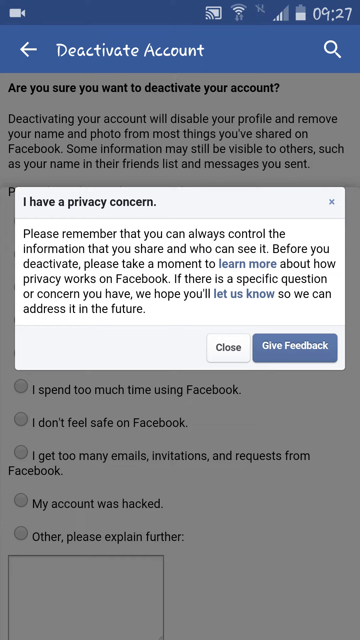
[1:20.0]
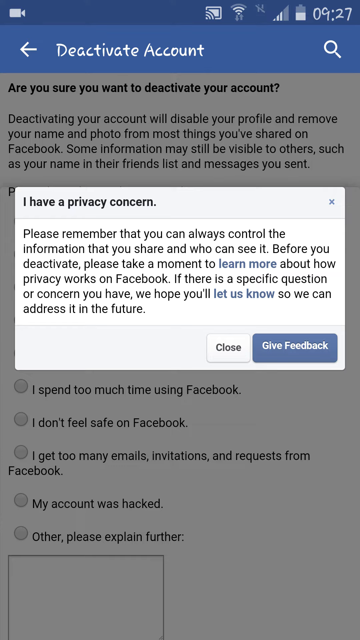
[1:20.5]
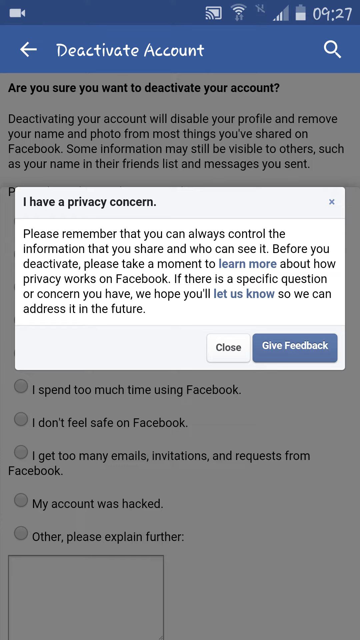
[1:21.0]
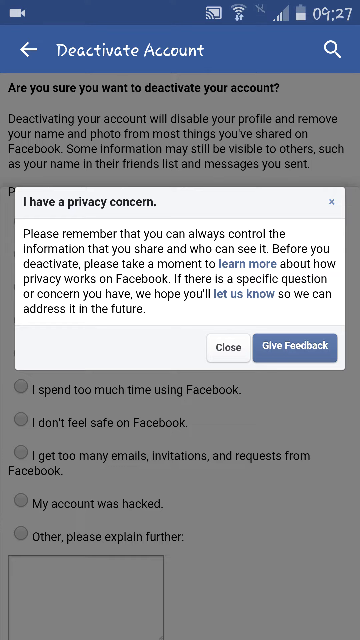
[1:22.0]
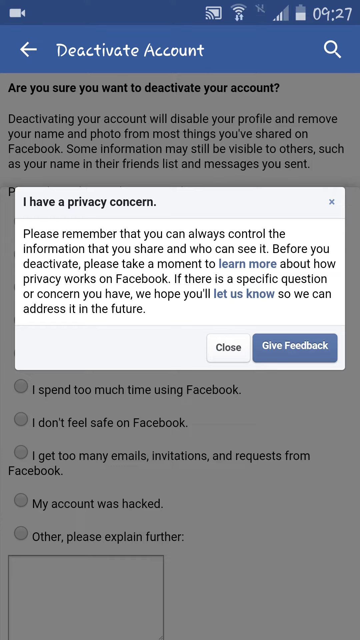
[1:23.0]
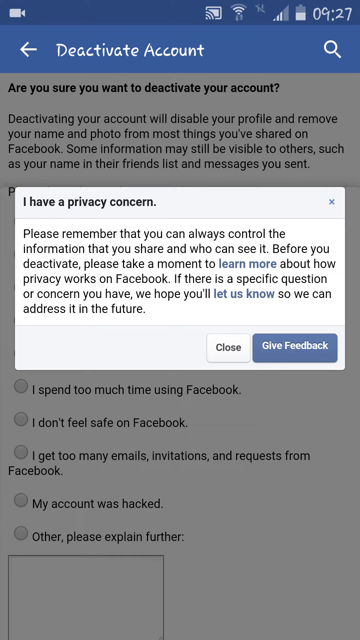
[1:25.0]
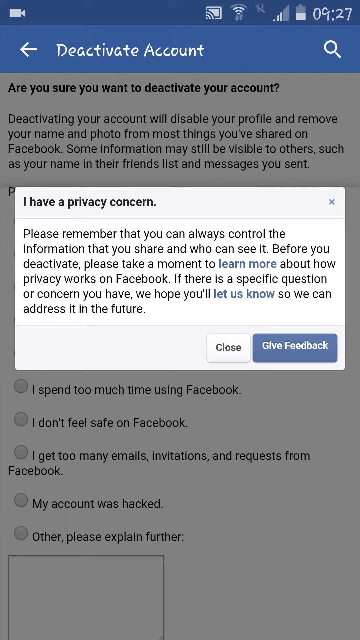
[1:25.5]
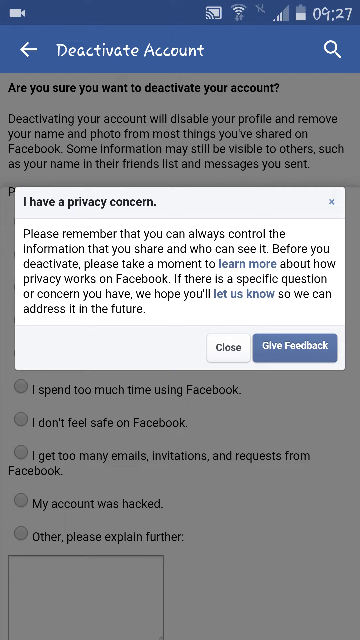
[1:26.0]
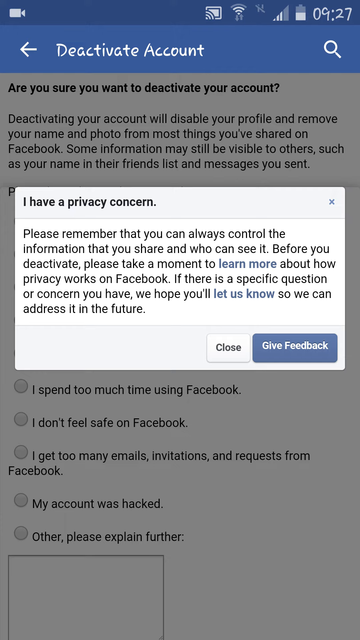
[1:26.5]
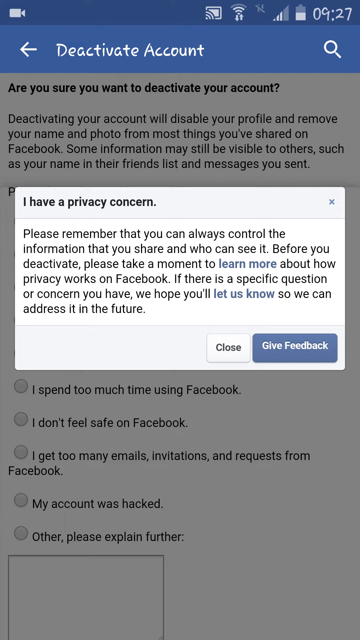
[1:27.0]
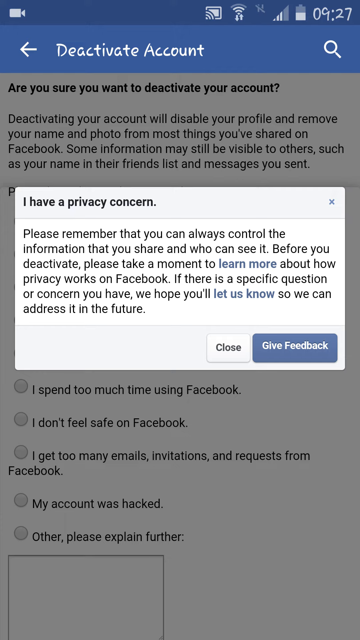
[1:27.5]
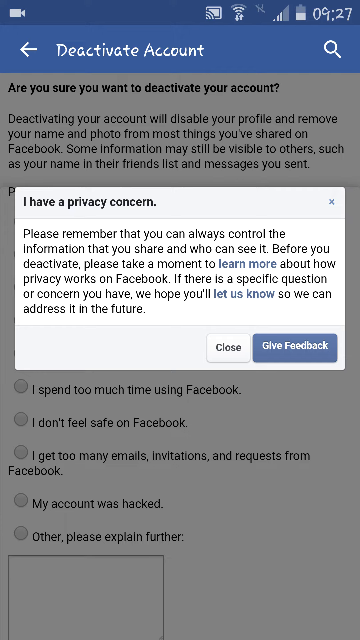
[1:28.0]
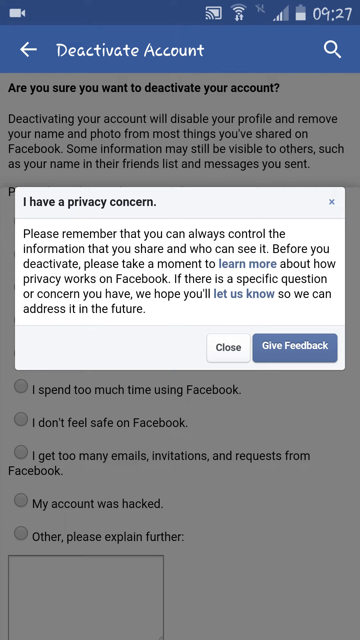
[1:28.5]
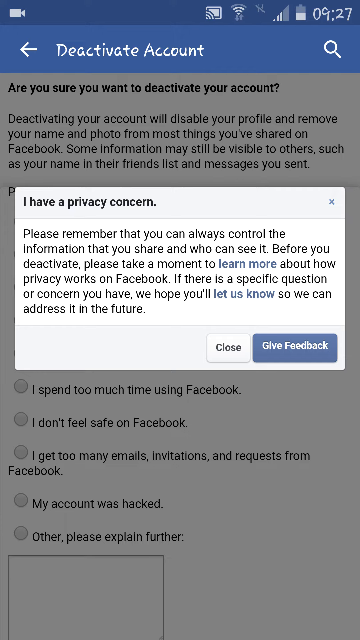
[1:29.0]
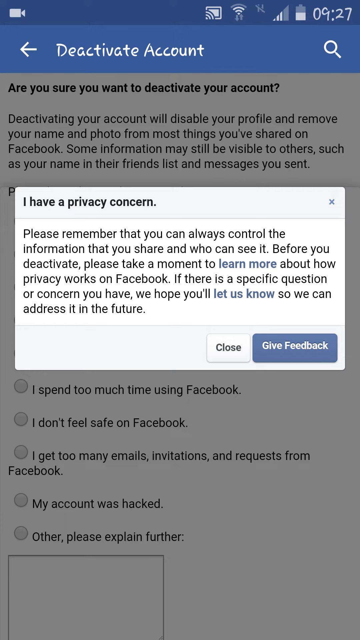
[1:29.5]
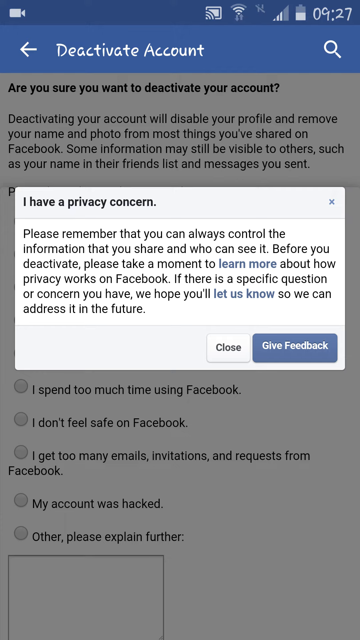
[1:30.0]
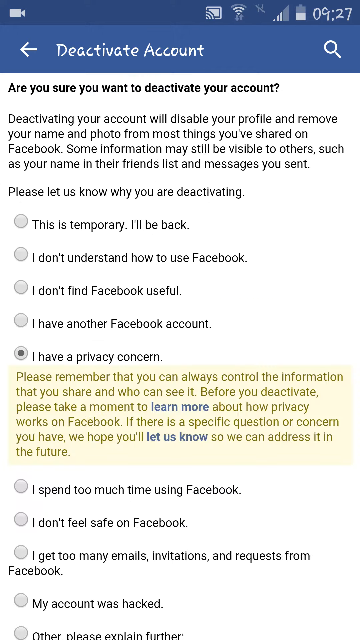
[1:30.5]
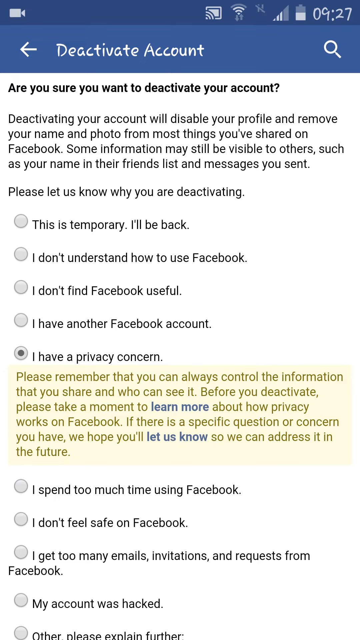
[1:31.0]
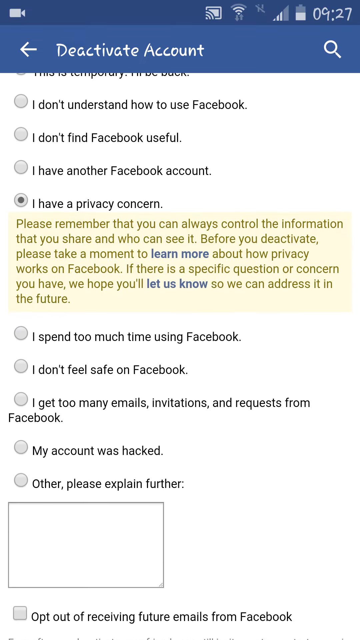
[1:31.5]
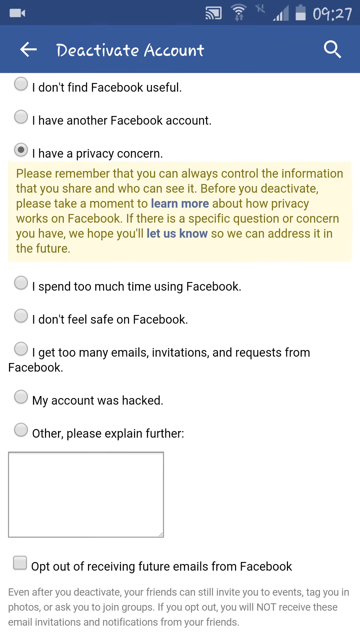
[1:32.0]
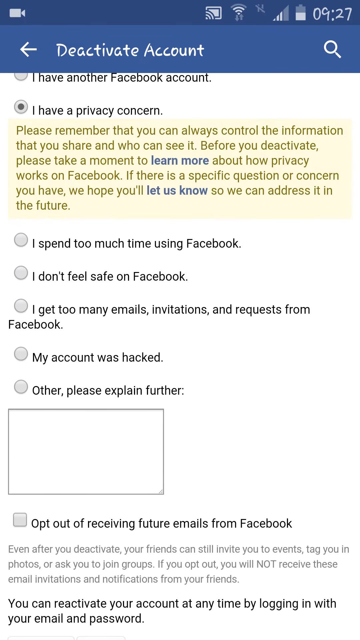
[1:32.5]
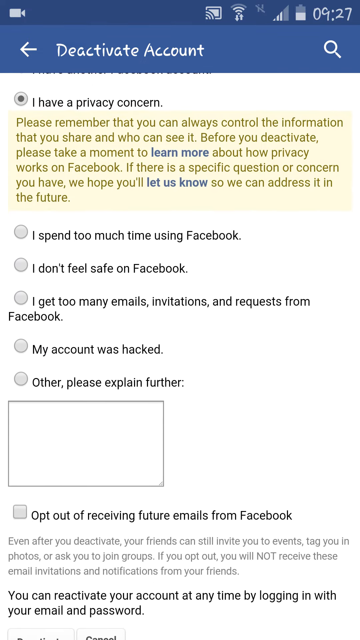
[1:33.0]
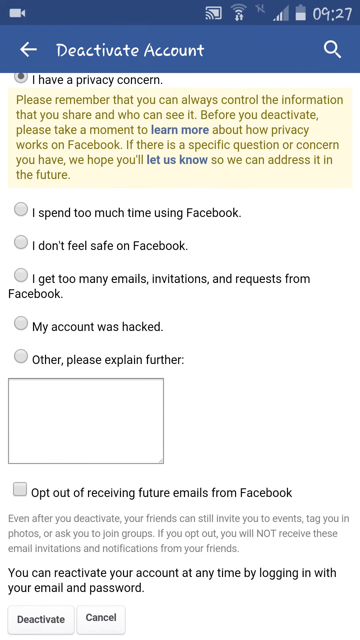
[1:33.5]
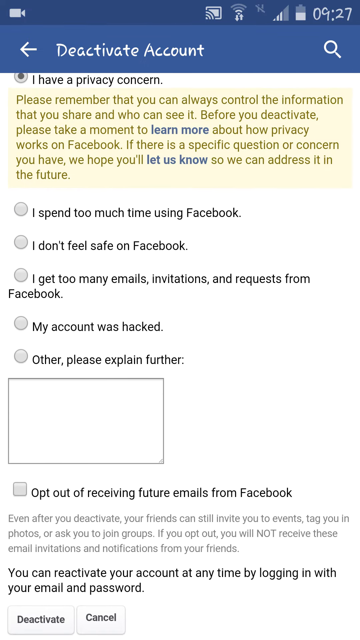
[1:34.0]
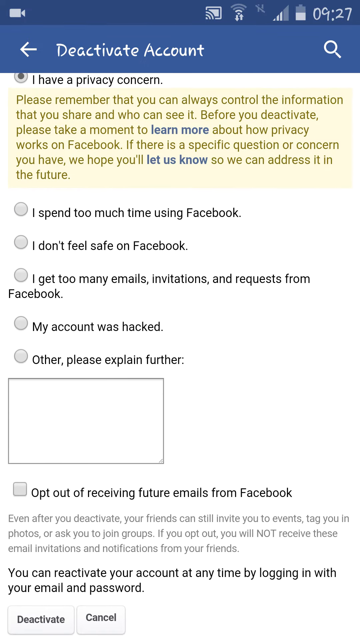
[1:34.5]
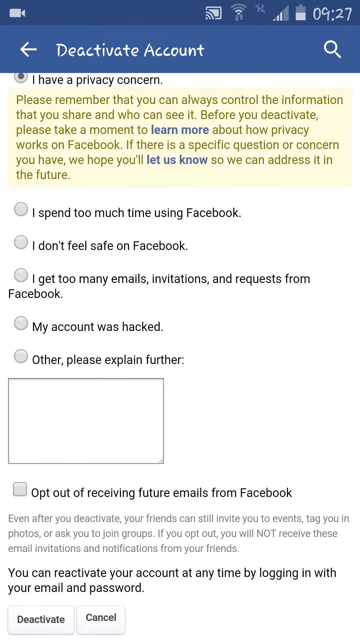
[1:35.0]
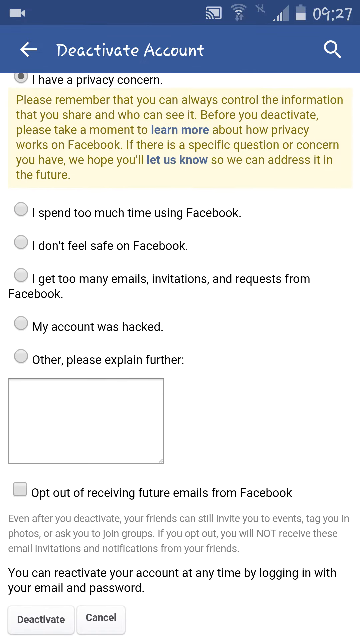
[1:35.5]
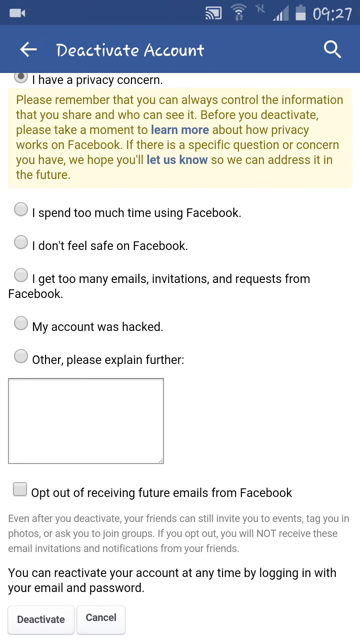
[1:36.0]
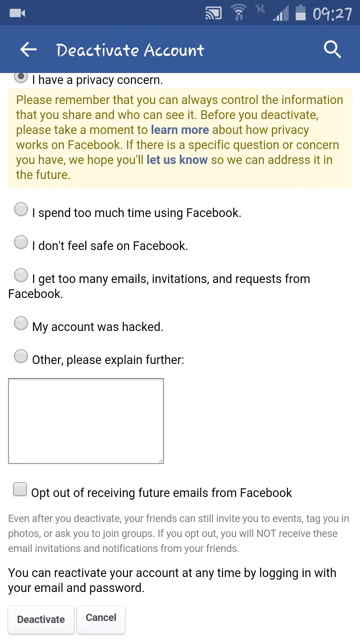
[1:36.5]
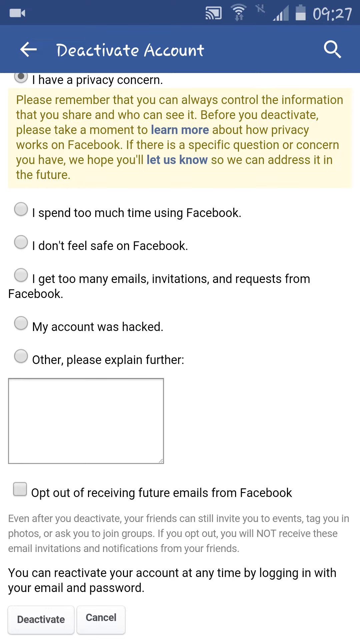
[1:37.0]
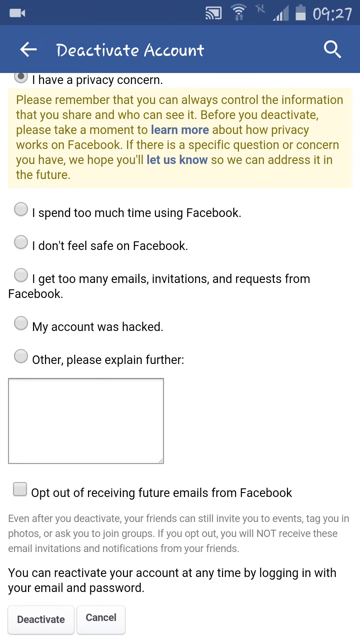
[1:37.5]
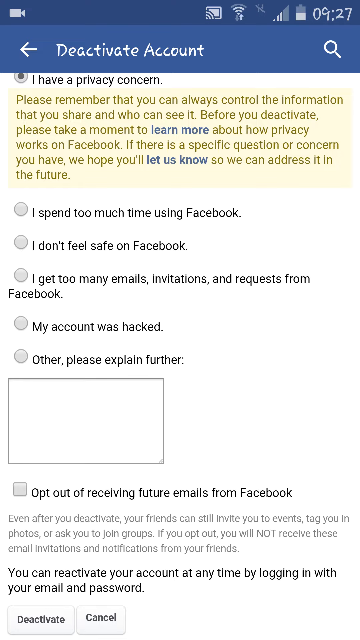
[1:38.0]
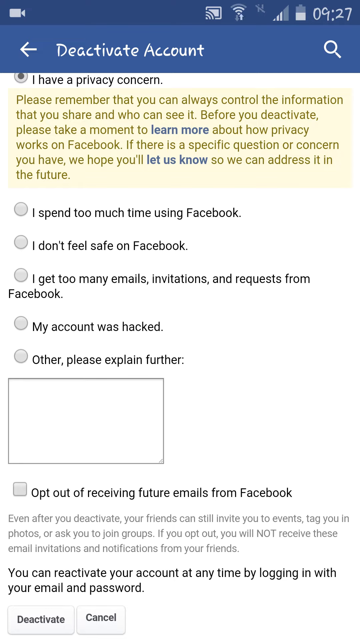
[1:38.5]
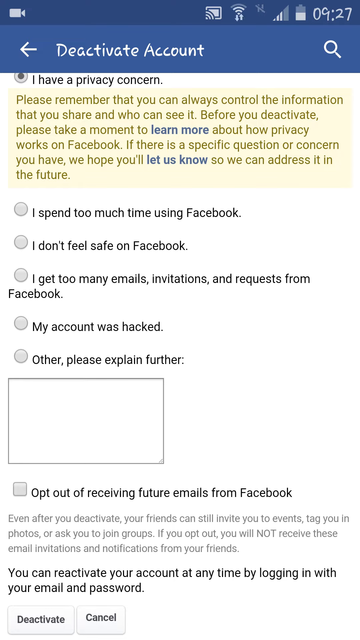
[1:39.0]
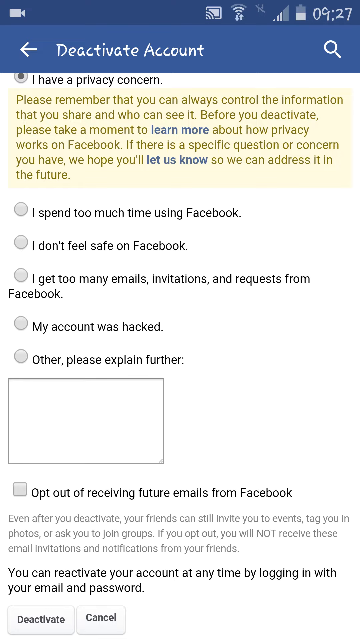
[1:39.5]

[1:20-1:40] On the deactivate account screen of the Facebook app on a cell phone, someone is trying to deactivate their Facebook account and must give a reason. There is a lot of text explaining what deactivating the account will do, with buttons below for selecting the reason. The person has chosen the privacy concern option, and below "I have a privacy concern" a box pops up explaining how privacy can be controlled, with two buttons, "close" and "give feedback". The person is probably reading the section and deciding whether to give feedback. Then the view returns to the deactivate account screen; it looks like they chose close. "I have a privacy concern" is shown as selected, and beneath it the same text about controlling privacy without deactivating the account is highlighted in yellow. The person scrolls down a little, waits for a bit, and then it goes back to the original screen.